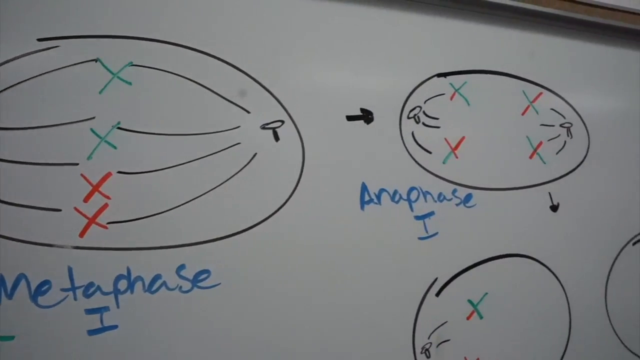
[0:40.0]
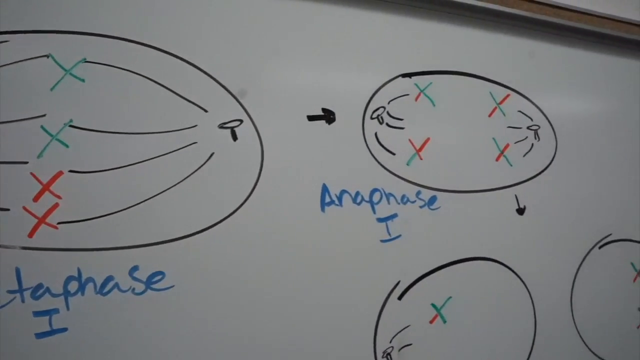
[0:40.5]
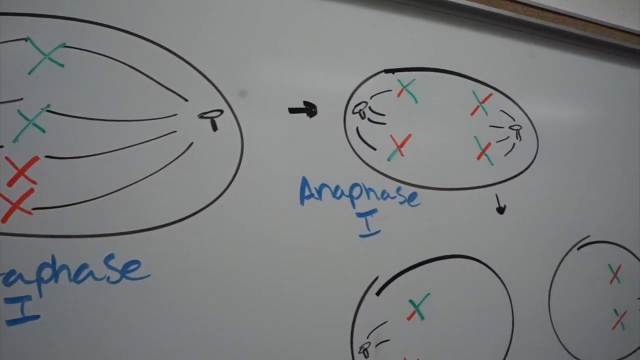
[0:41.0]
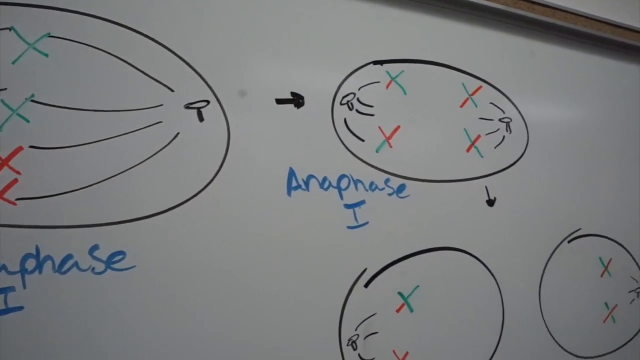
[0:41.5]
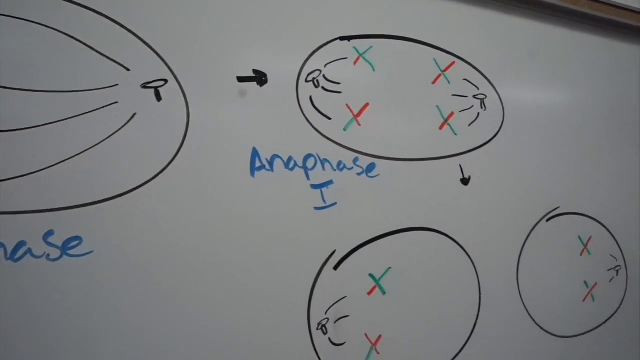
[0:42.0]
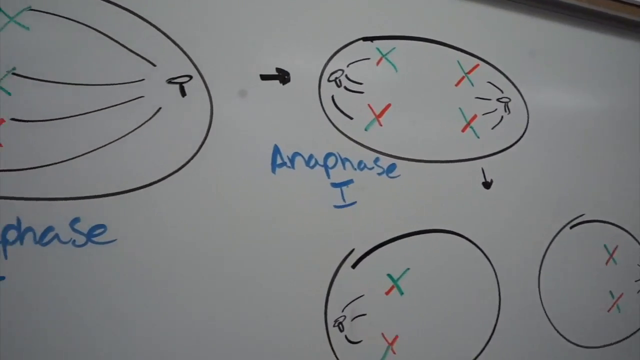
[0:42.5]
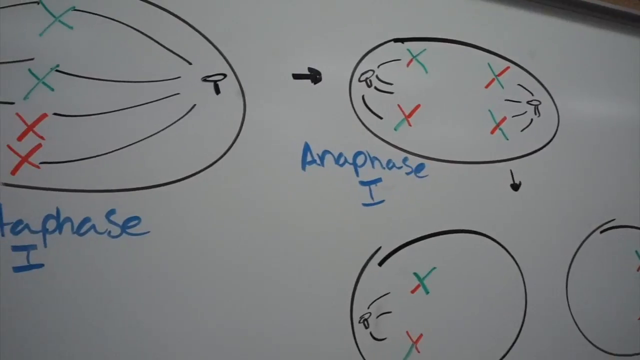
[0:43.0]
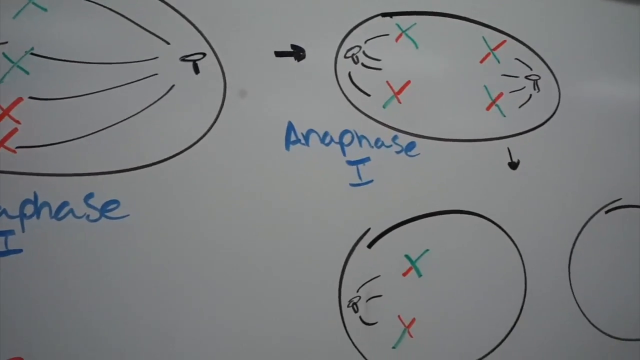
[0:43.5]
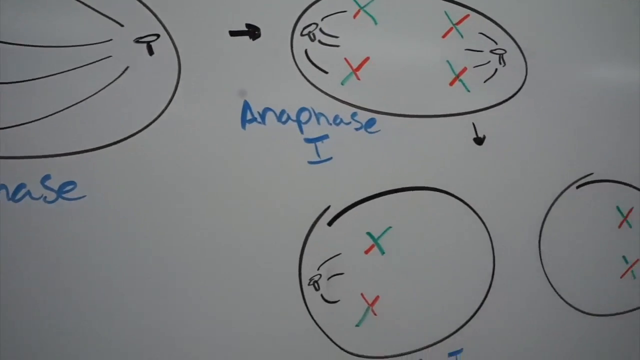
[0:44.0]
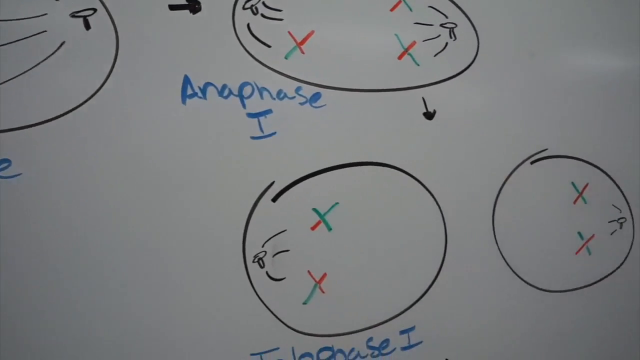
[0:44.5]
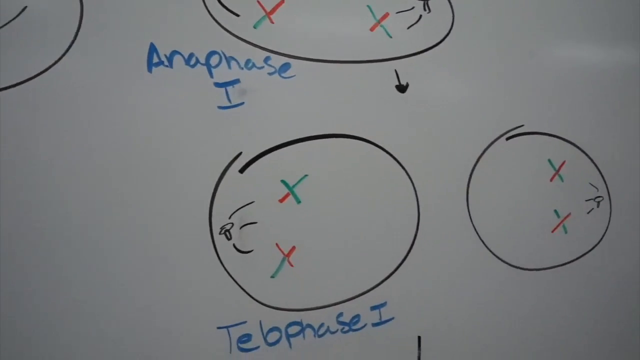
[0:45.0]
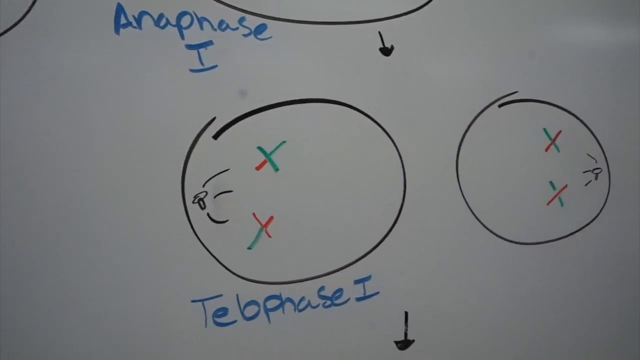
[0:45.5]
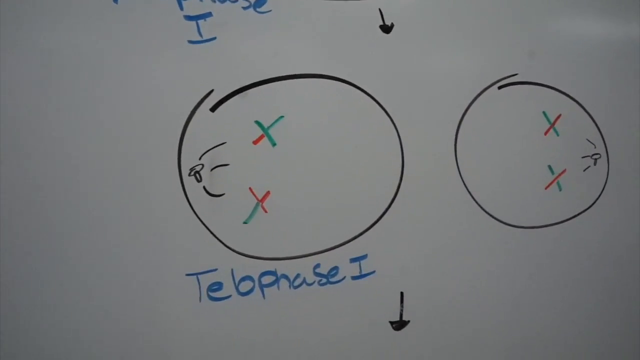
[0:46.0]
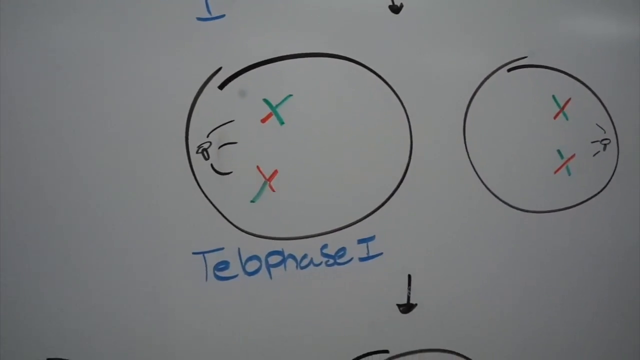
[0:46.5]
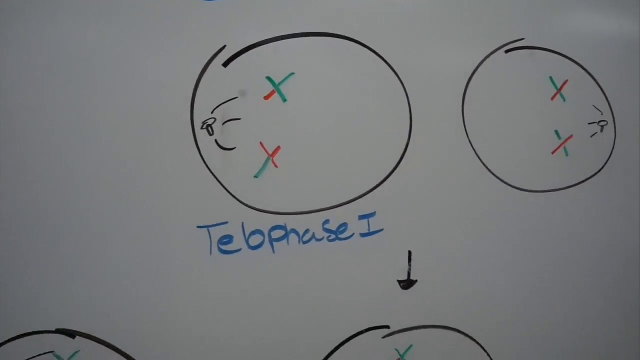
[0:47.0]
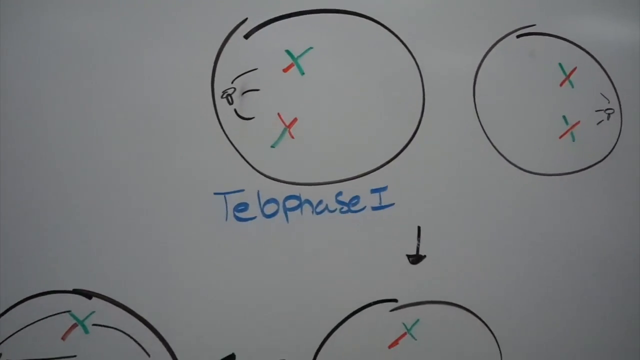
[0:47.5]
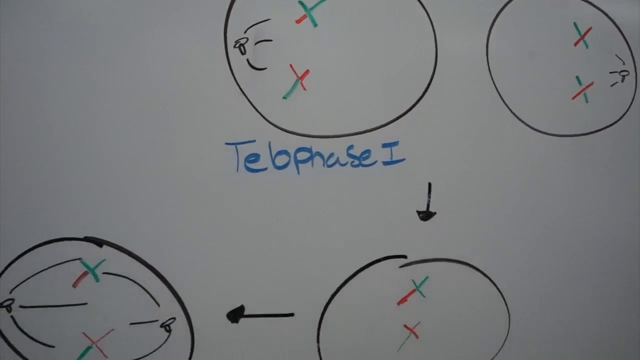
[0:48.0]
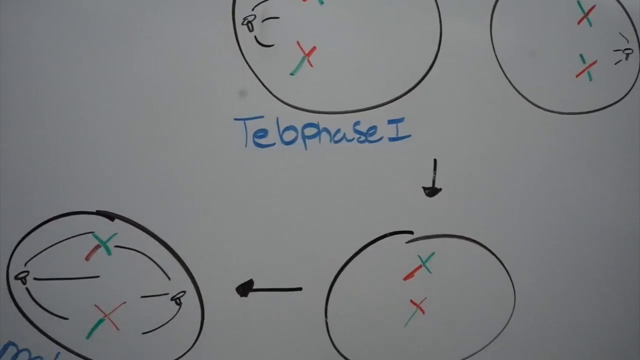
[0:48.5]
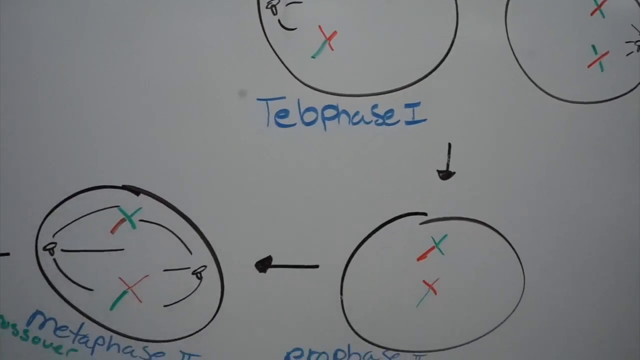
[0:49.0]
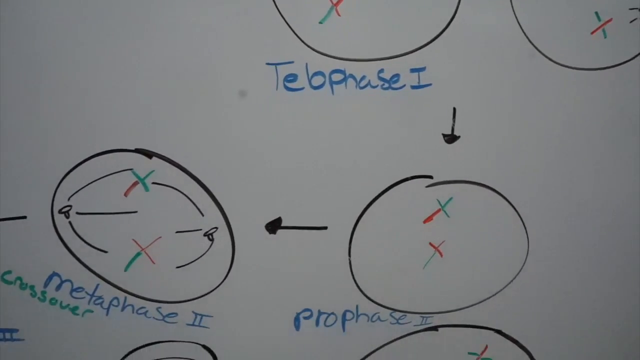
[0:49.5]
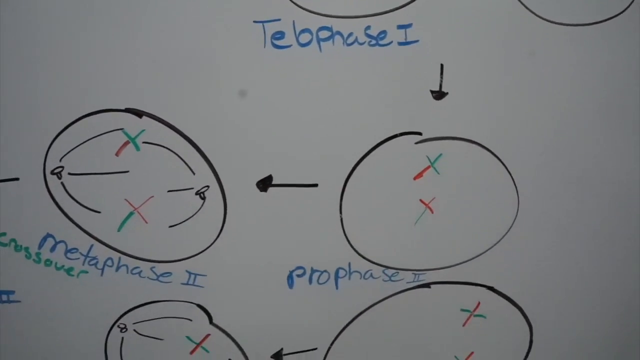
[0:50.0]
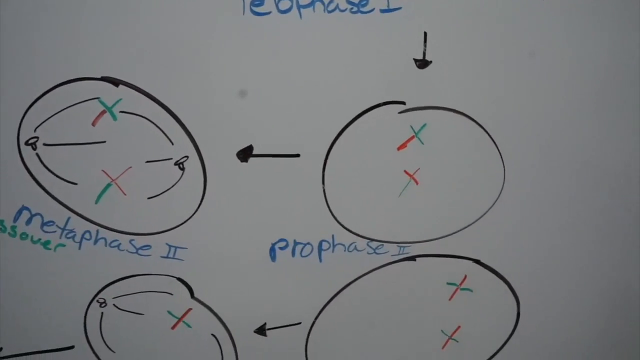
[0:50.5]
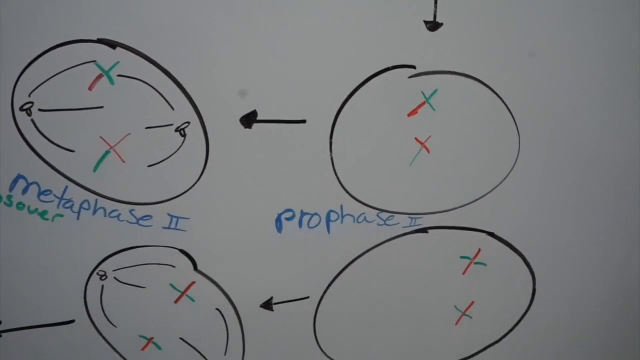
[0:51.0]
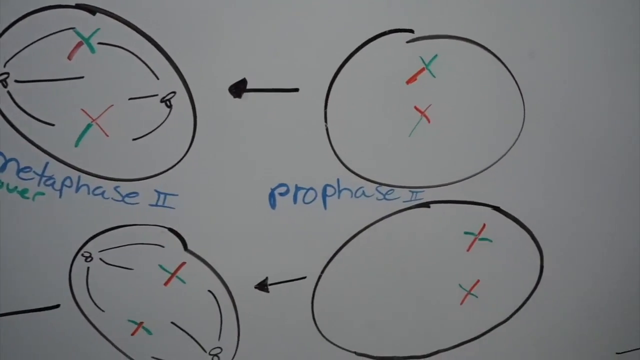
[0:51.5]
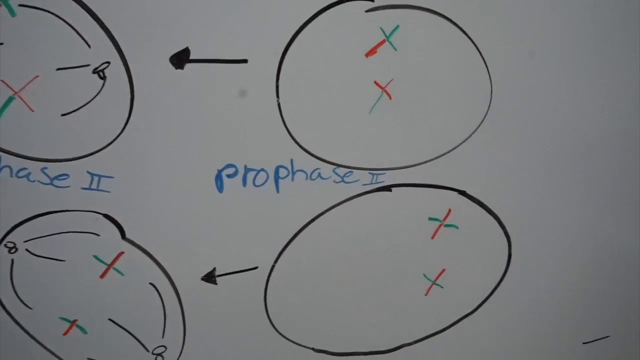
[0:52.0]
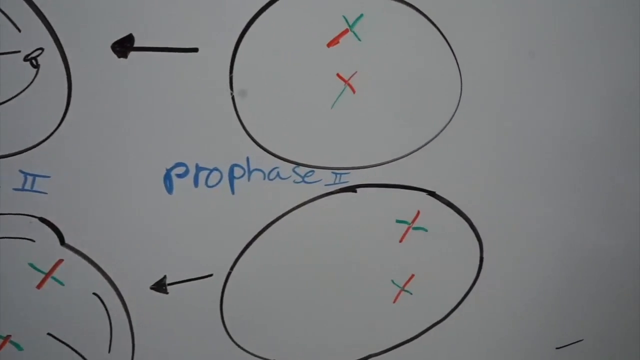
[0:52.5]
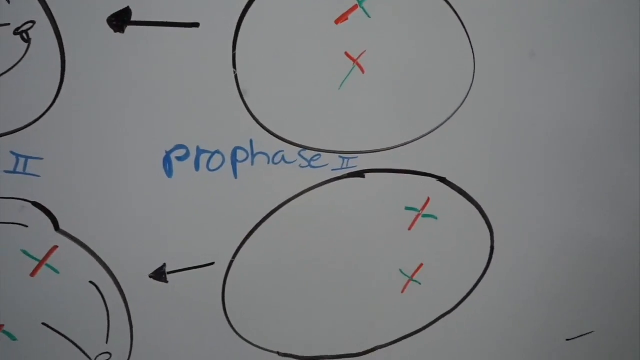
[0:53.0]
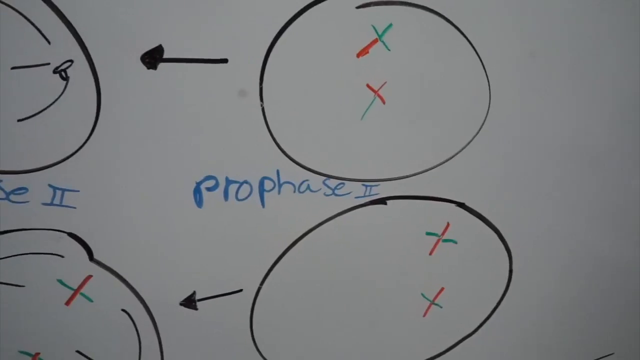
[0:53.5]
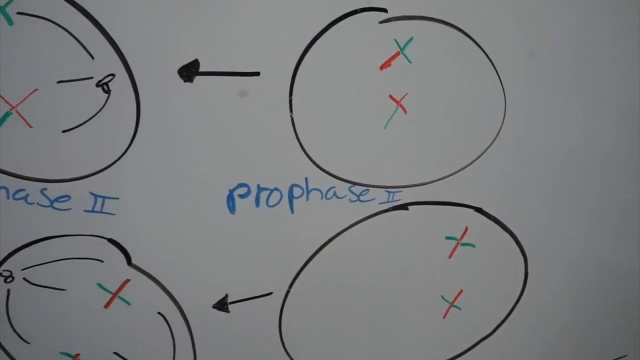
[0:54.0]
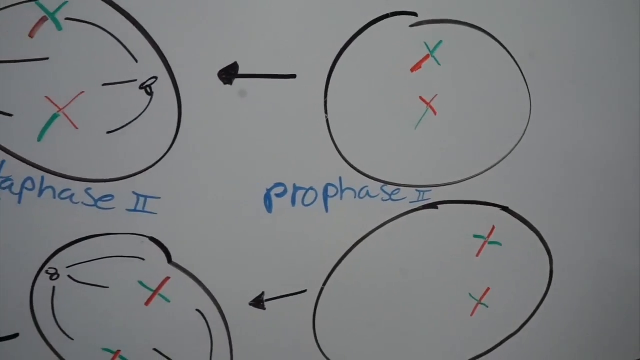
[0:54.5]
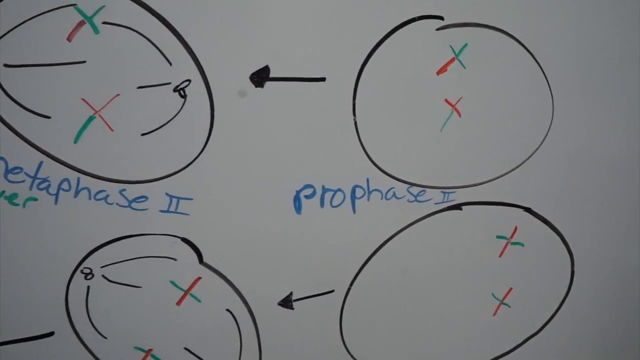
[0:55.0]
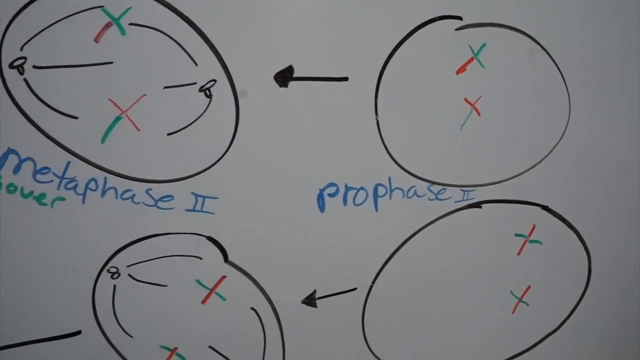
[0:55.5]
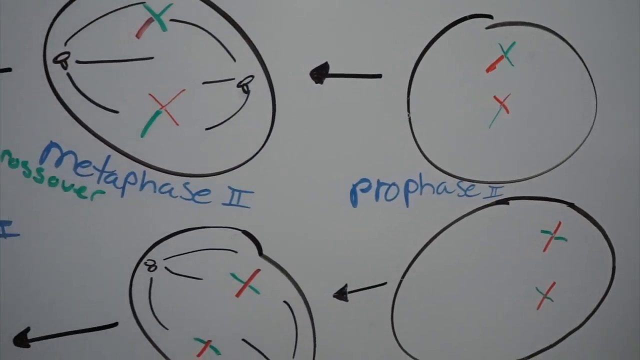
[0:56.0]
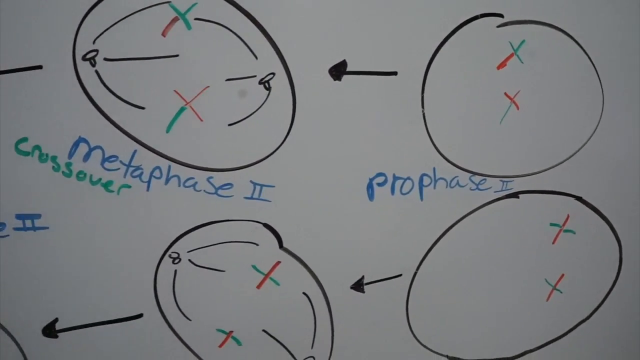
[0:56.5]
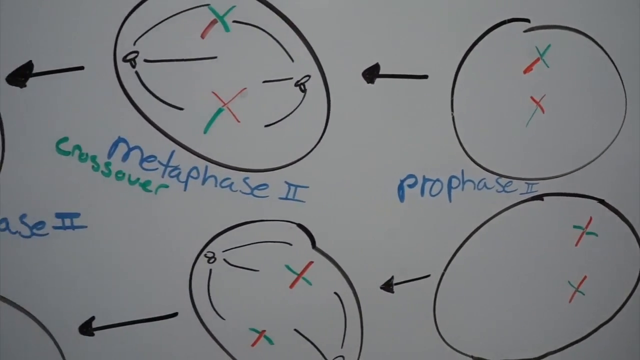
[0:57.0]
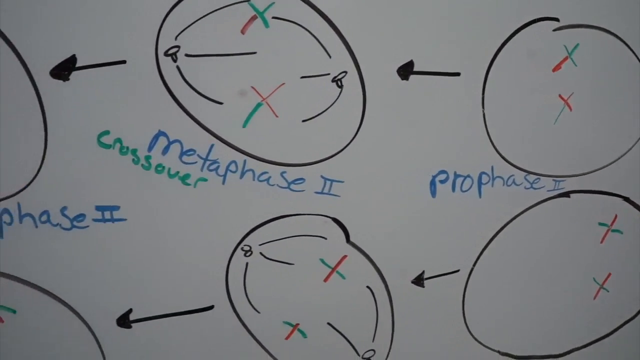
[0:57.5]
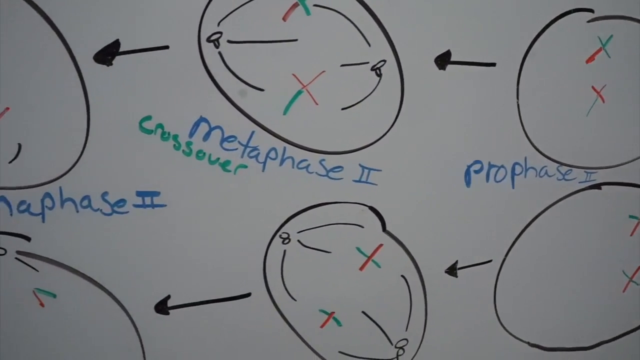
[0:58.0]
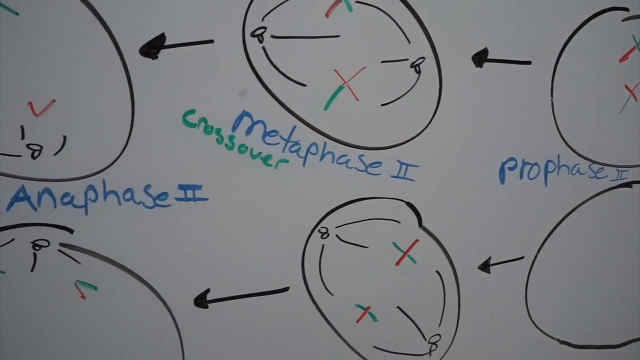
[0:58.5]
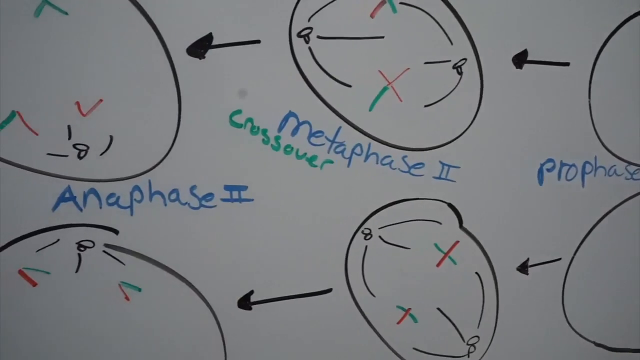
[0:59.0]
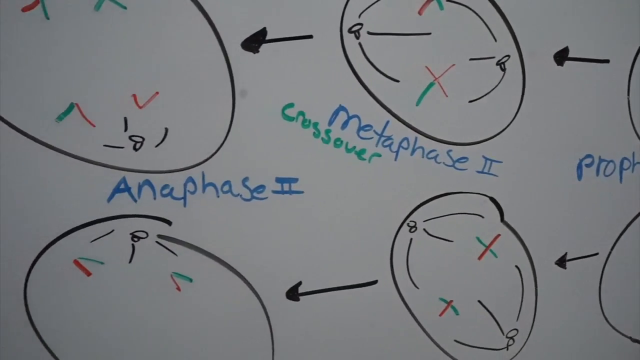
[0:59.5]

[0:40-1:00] Drawings on a dry erase board show metaphase one going to anaphase one, with an arrow pointing down. The person filming moves to the next phase, labeled telophase one, and another black arrow leads down to prophase two and metaphase two. The word "crossover" appears, along with "anaphase one". The labels metaphase, anaphase, telophase, prophase two and metaphase two are all written in blue. In the drawings, the ovals are drawn in black and the X's in green, orange or red, and the X's have crossed over at anaphase one.